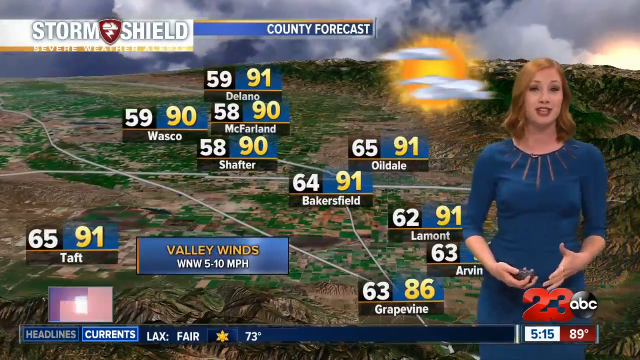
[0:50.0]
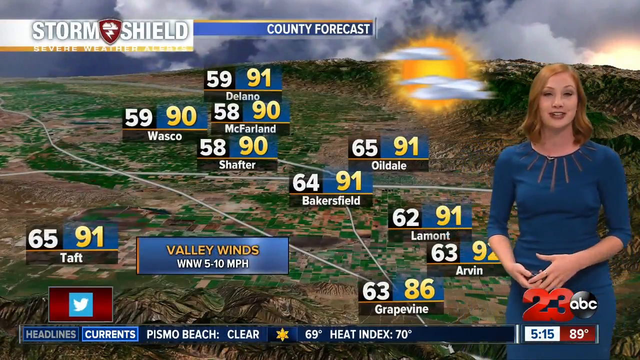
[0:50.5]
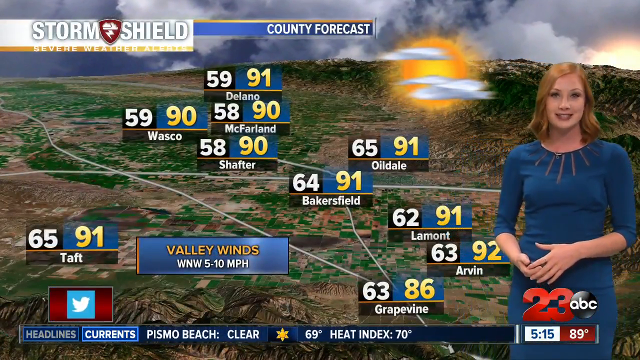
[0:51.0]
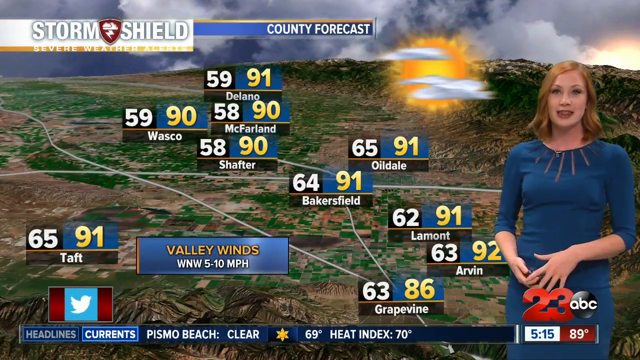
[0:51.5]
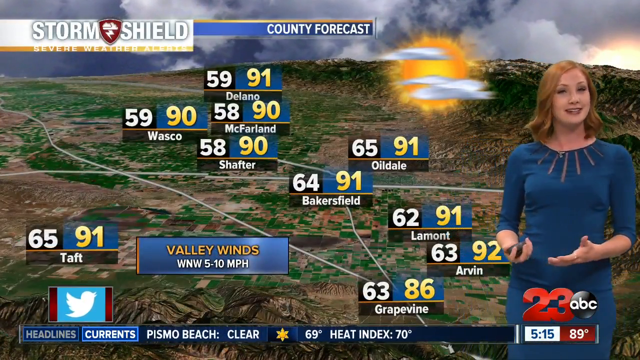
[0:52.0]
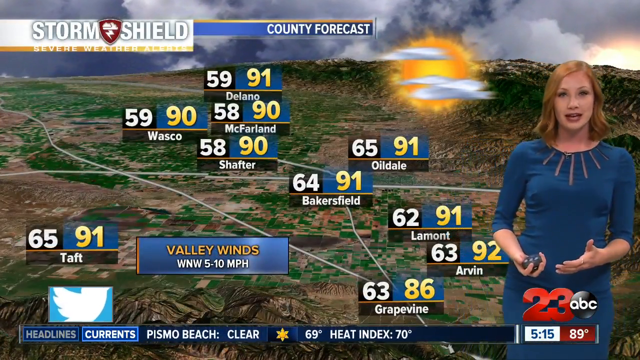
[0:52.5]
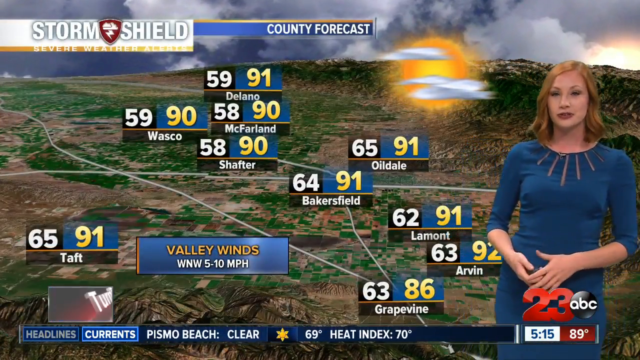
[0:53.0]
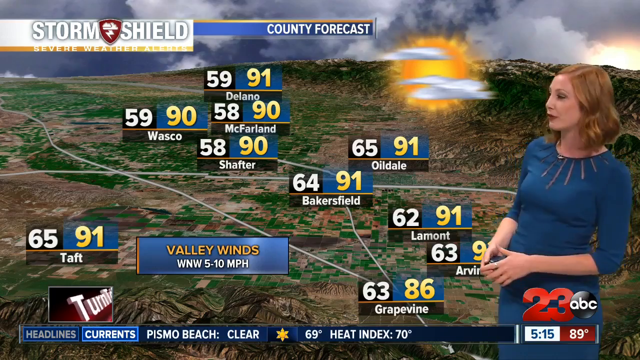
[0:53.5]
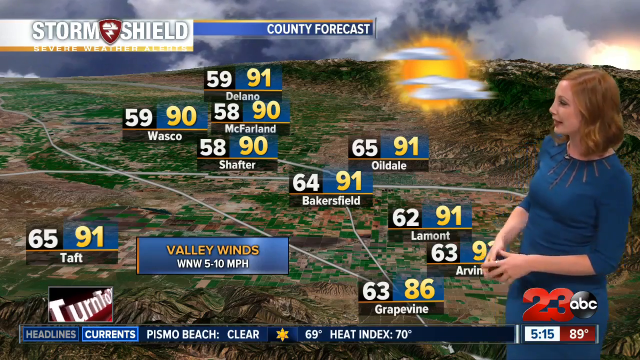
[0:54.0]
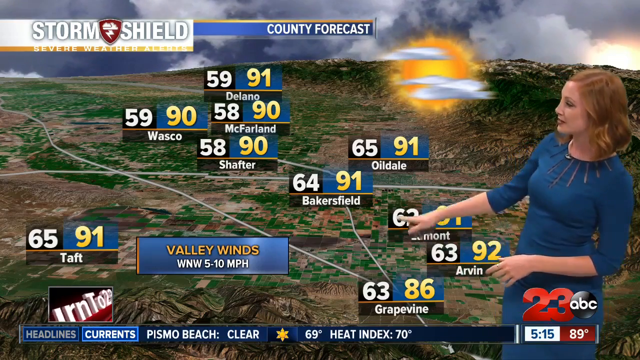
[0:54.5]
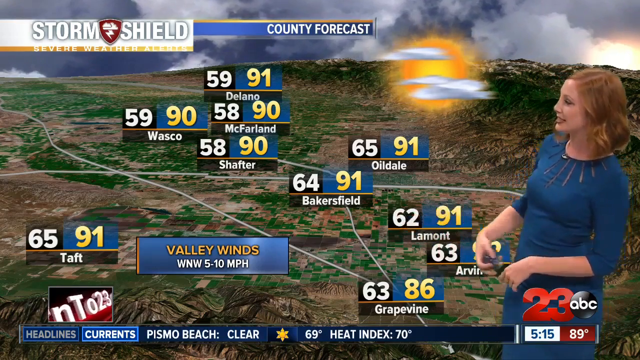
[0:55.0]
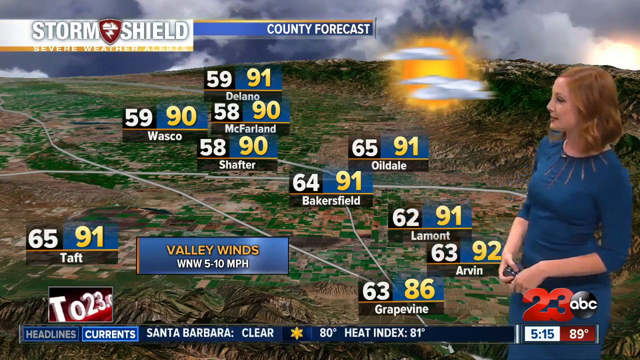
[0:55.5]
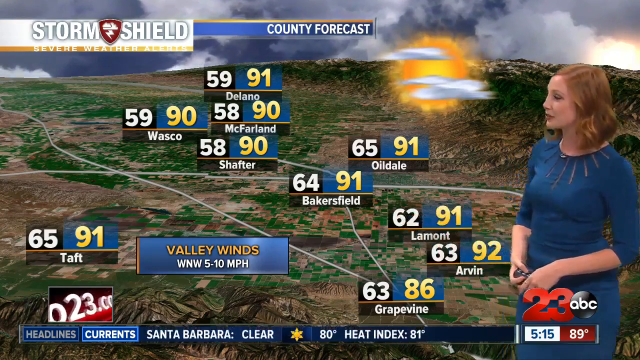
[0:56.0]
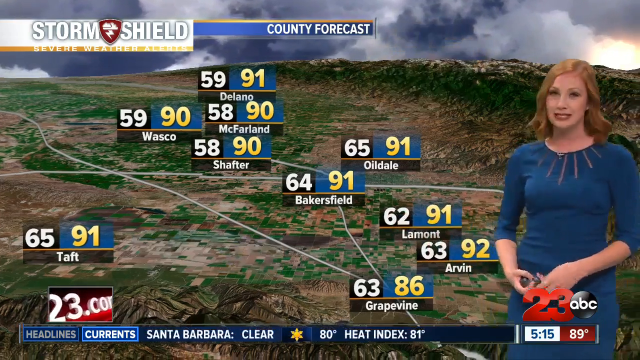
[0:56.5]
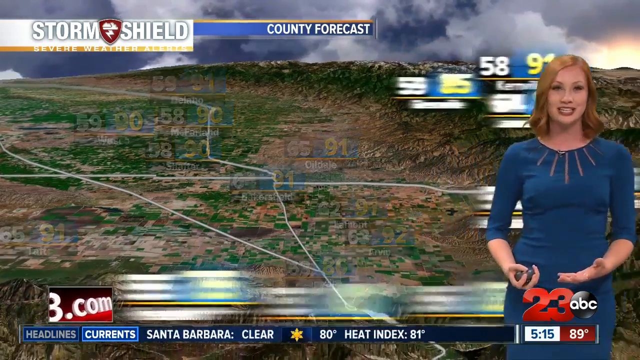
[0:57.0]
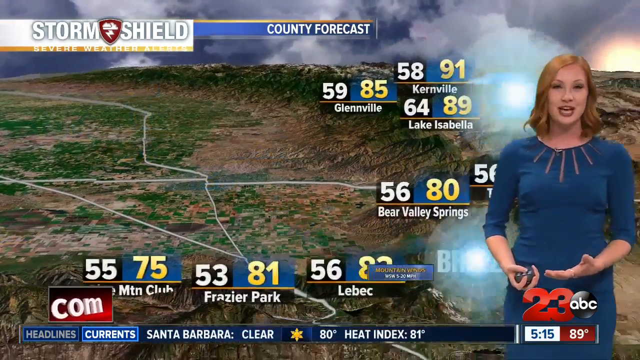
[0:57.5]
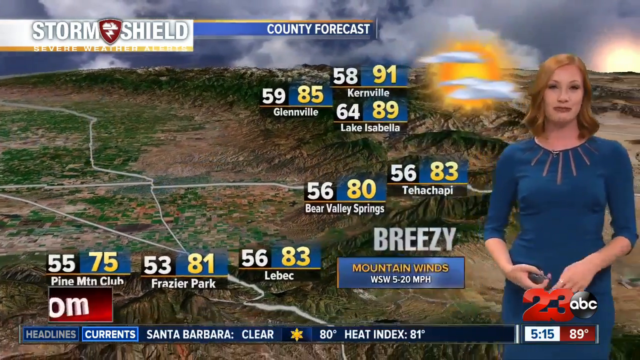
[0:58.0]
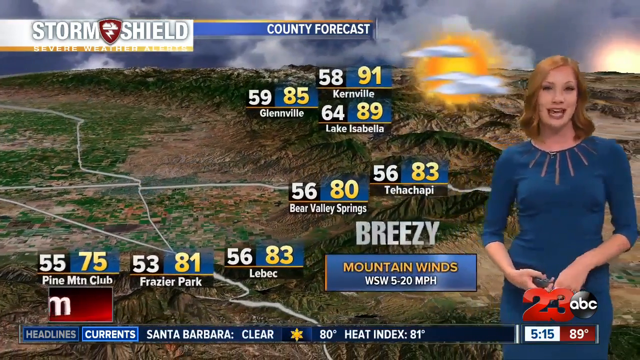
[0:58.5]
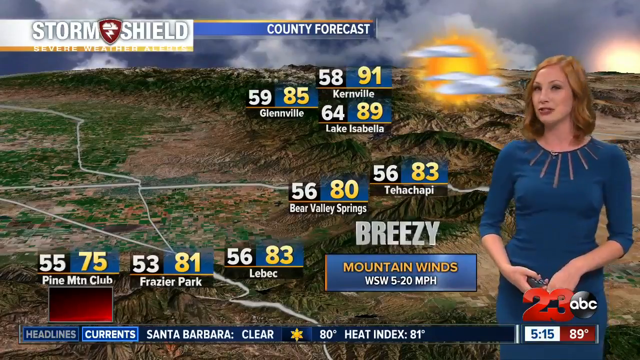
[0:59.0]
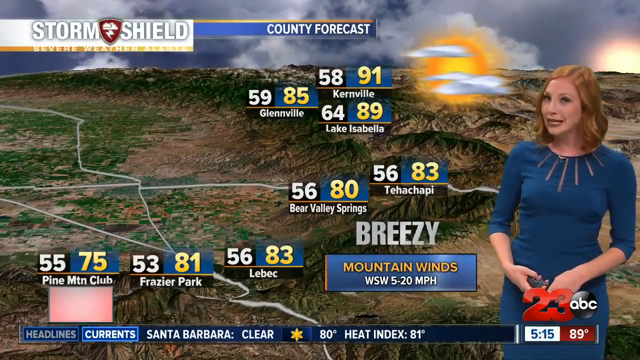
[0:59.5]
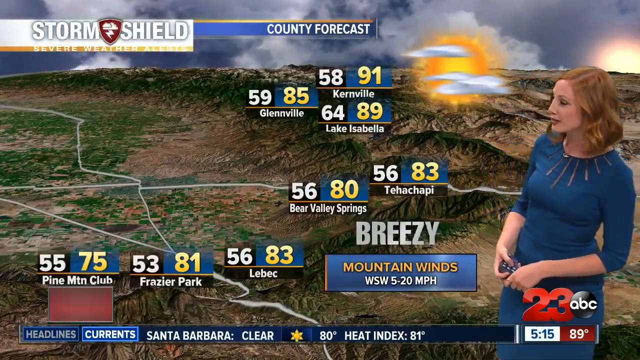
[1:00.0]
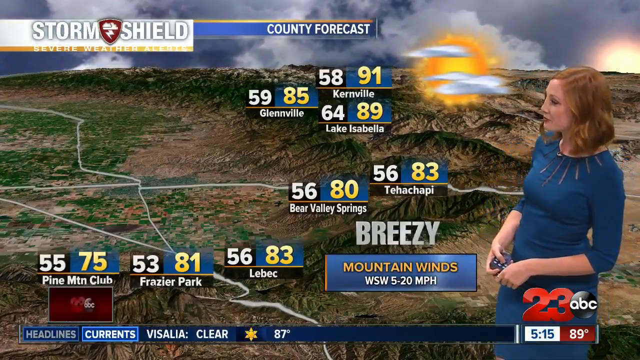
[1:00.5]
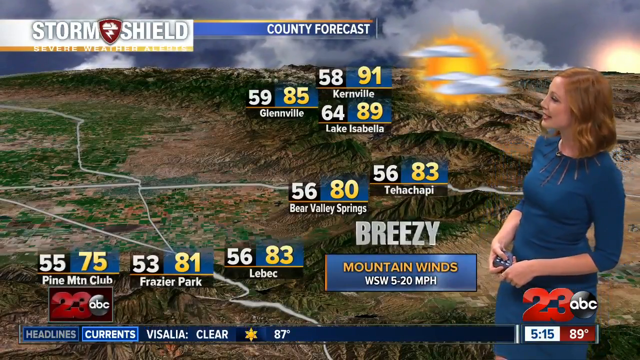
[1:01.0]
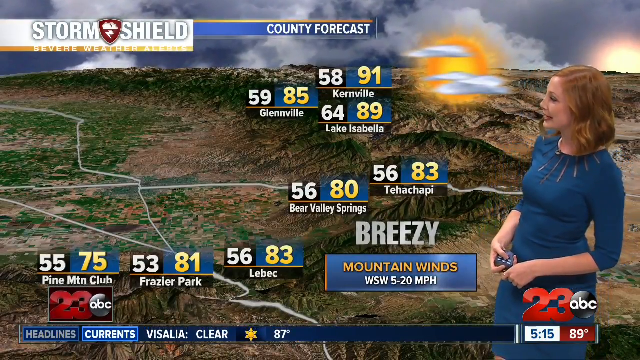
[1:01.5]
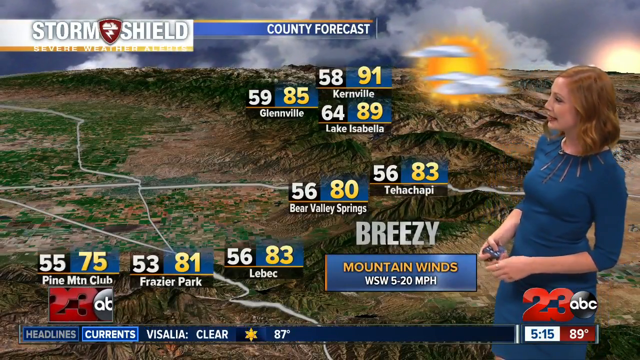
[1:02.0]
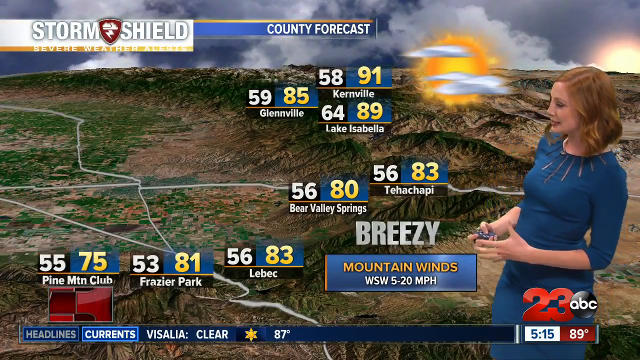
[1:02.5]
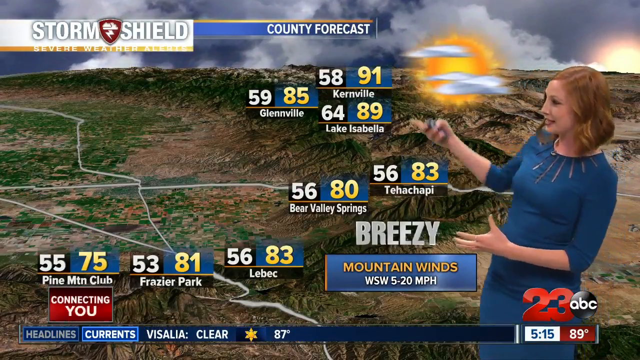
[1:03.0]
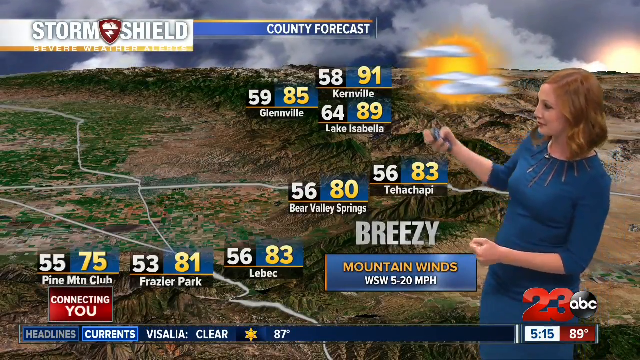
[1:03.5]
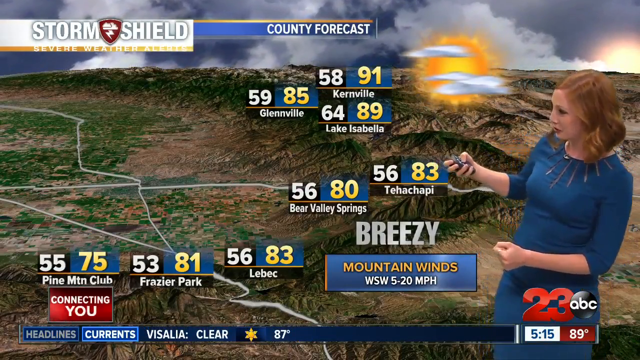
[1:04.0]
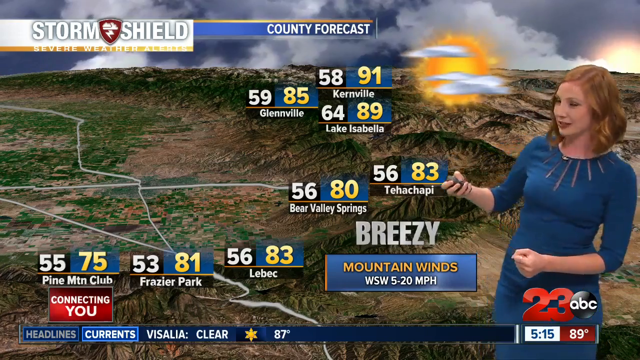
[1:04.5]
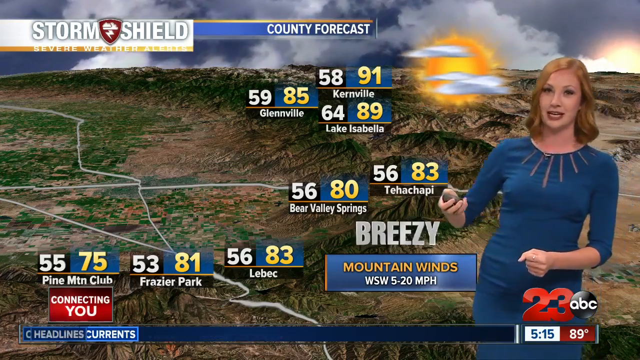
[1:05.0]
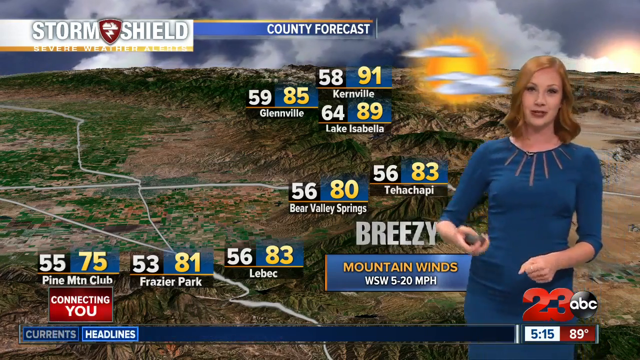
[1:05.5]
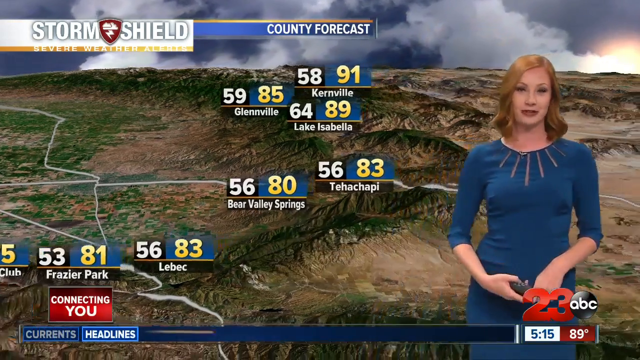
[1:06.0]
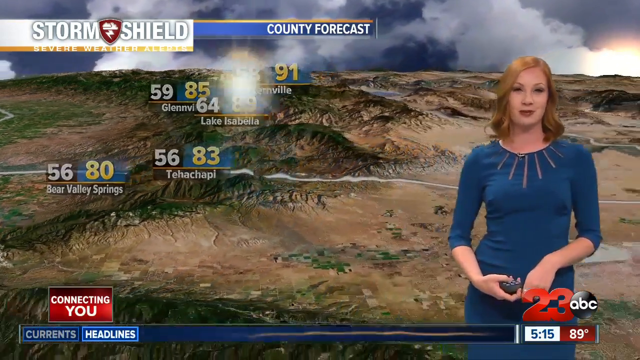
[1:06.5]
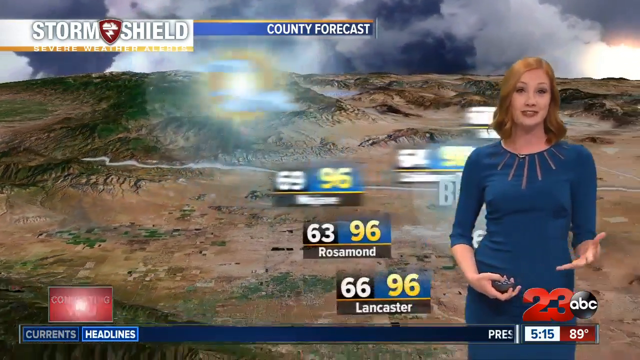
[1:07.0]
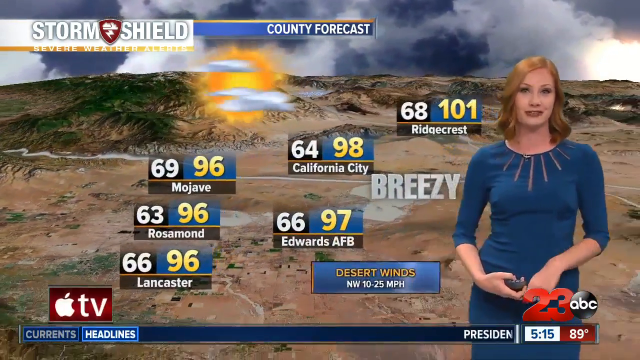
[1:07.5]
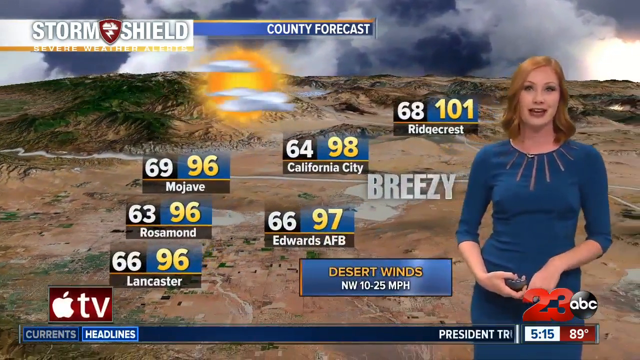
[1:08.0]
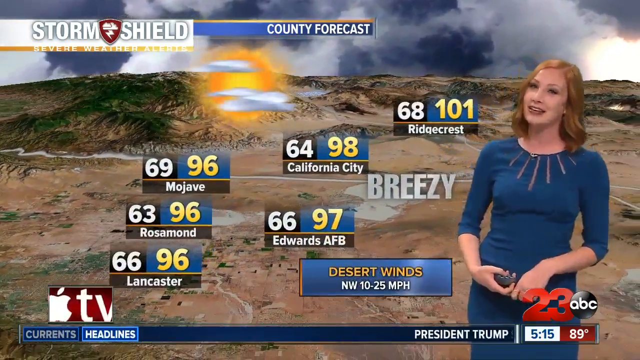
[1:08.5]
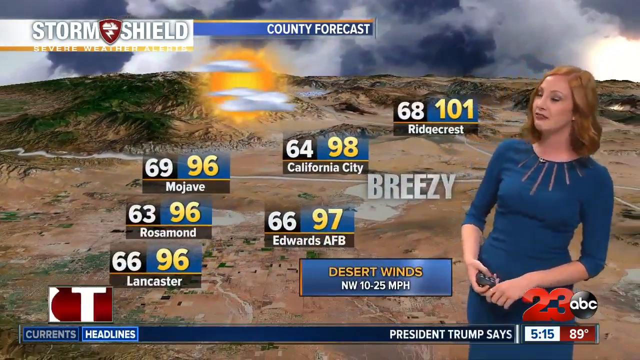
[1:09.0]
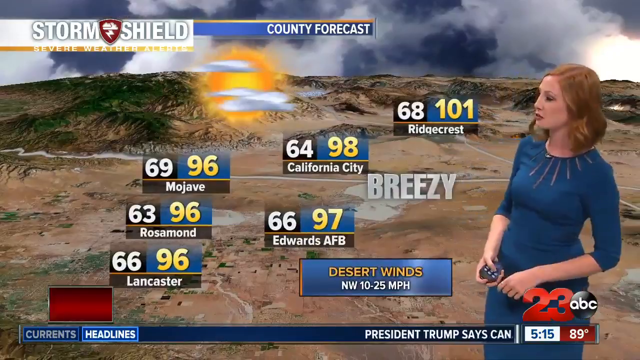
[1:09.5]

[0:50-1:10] In a news studio, a female news reporter with long blonde hair, wearing a blue dress and holding a remote in her right hand, stands beside a large screen display. The display shows numbers, with the text "Storm Shield" in the corner. The screen zooms in and out to show other places with different weather conditions; the numbers appear in white and yellow, along with green vegetation, clouds and sun. The reporter gestures with her hands and points at different spots with different numbers, at times facing the display, then turning to face the camera as she moves and reports on the weather shown on the big screen next to her.